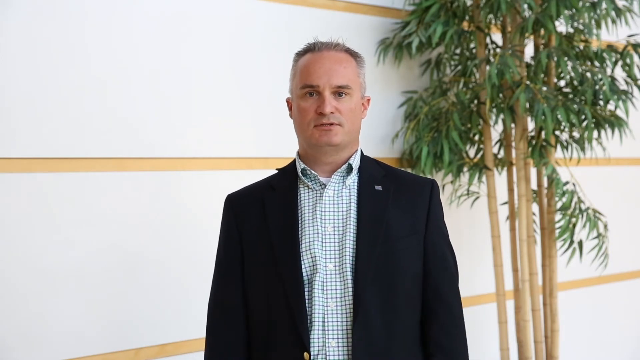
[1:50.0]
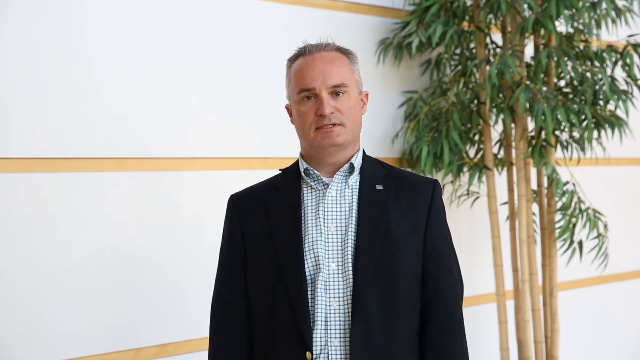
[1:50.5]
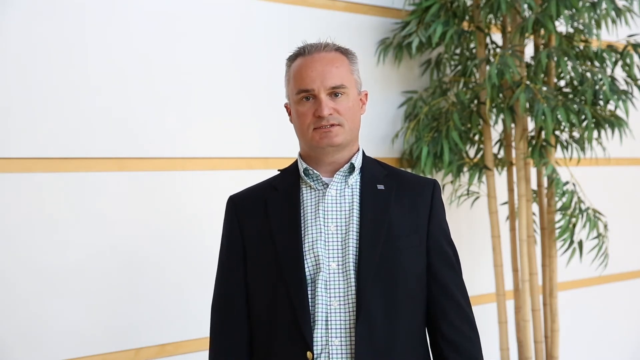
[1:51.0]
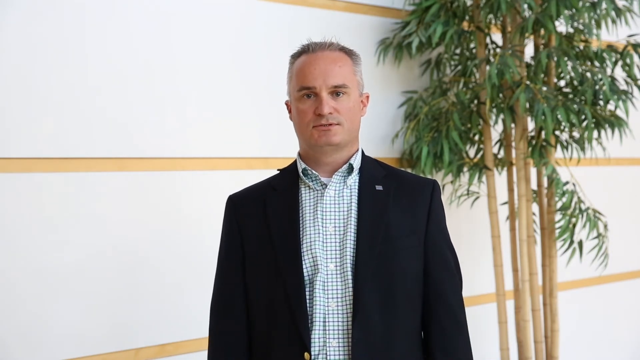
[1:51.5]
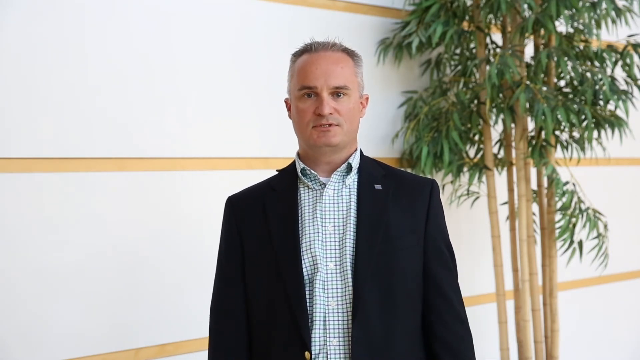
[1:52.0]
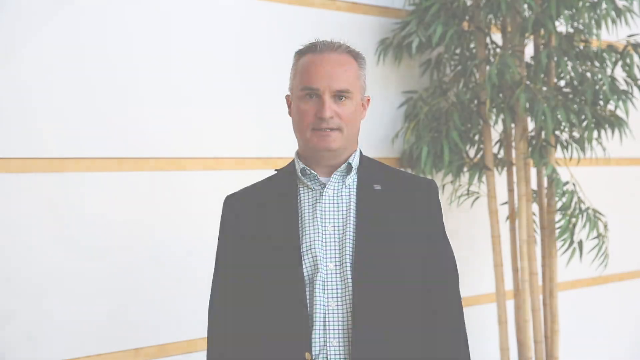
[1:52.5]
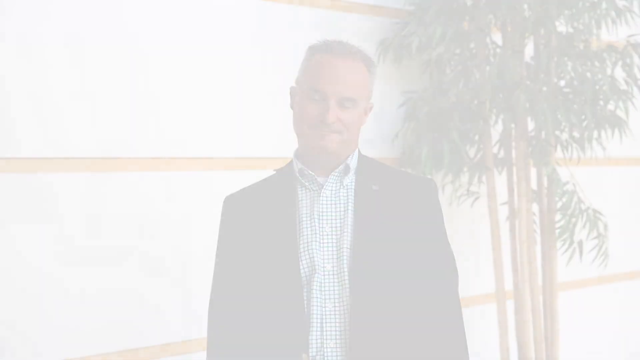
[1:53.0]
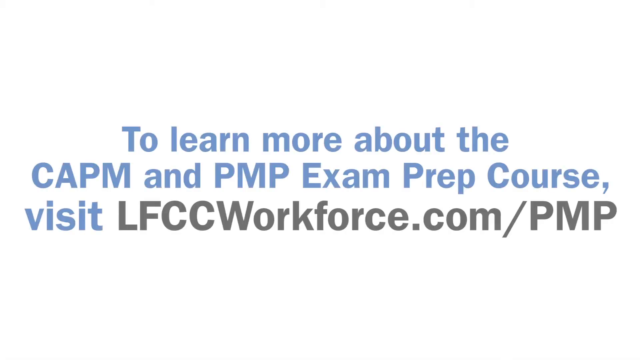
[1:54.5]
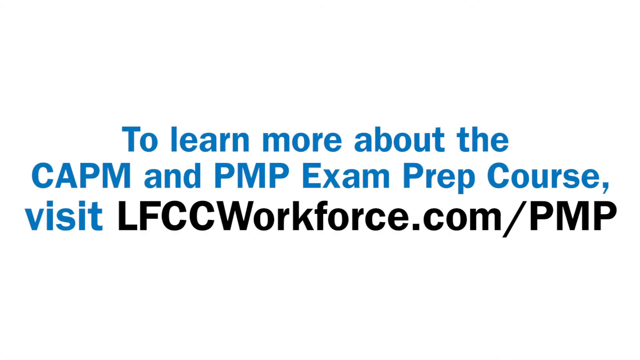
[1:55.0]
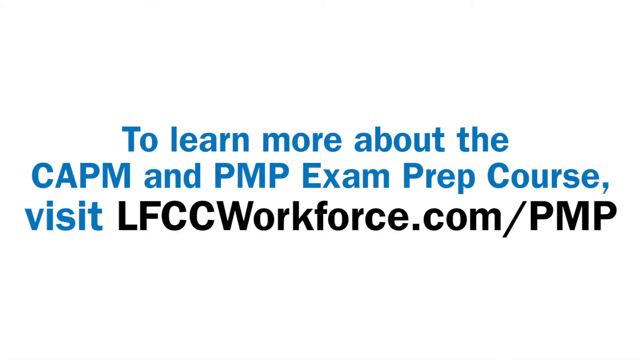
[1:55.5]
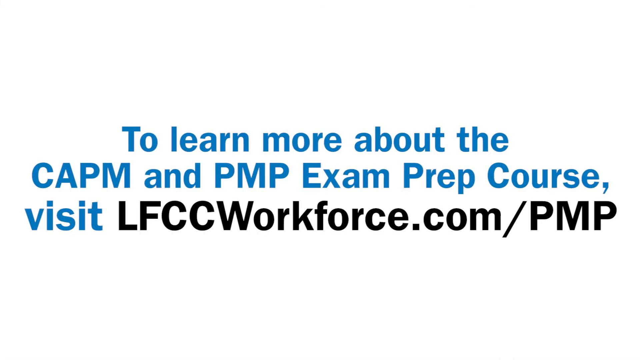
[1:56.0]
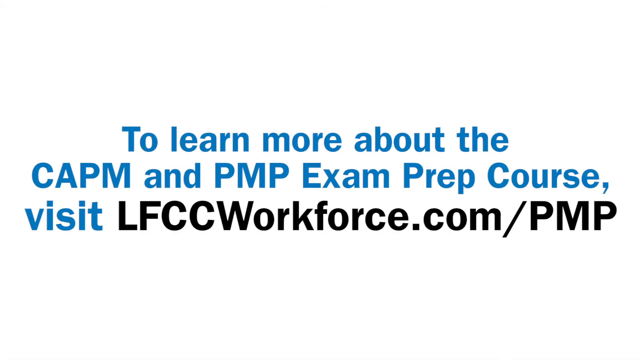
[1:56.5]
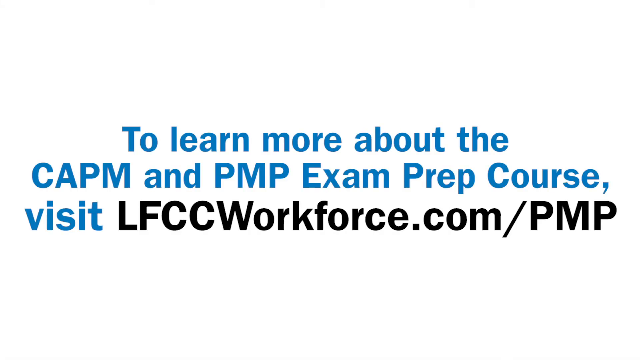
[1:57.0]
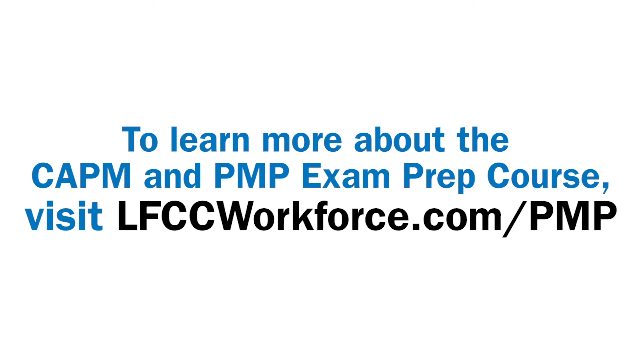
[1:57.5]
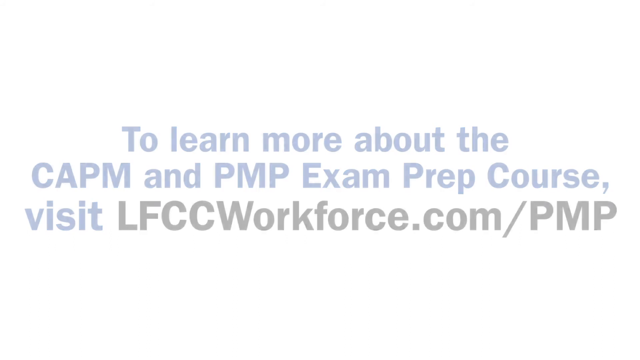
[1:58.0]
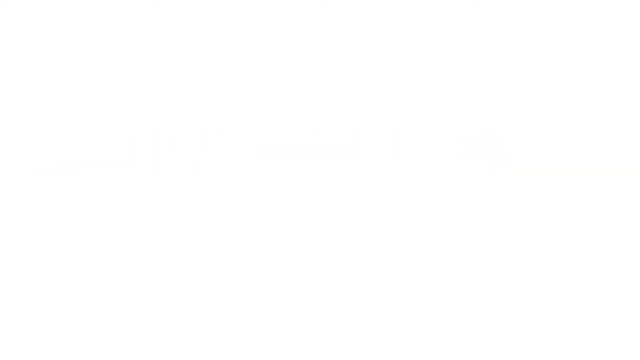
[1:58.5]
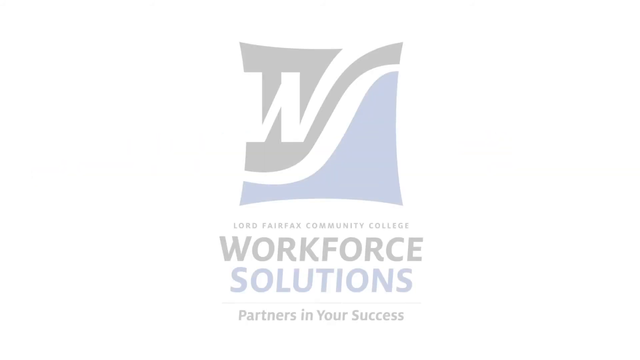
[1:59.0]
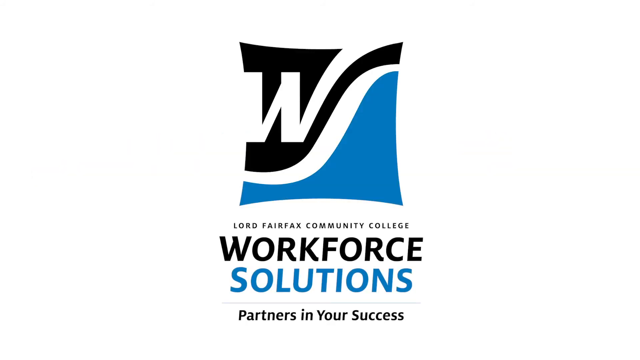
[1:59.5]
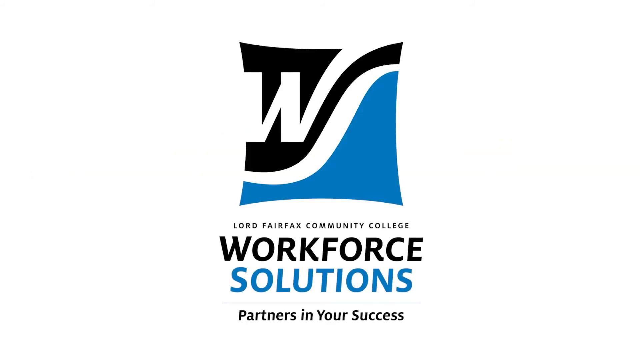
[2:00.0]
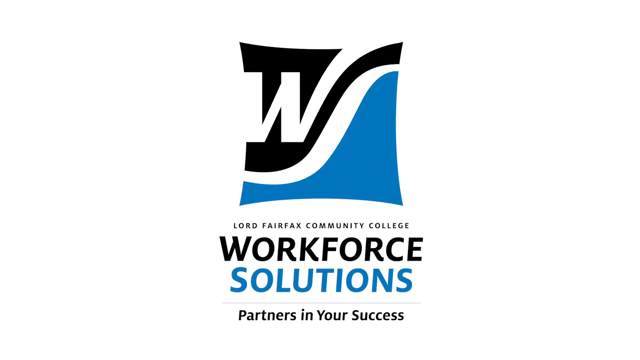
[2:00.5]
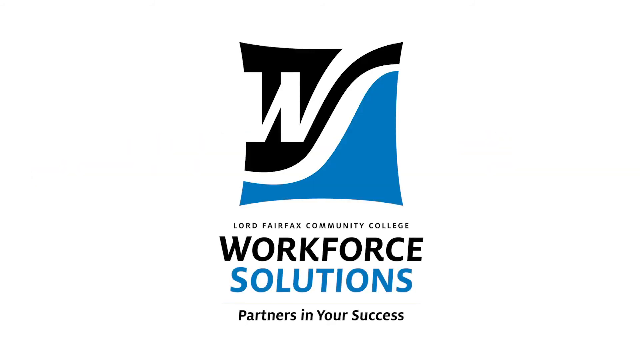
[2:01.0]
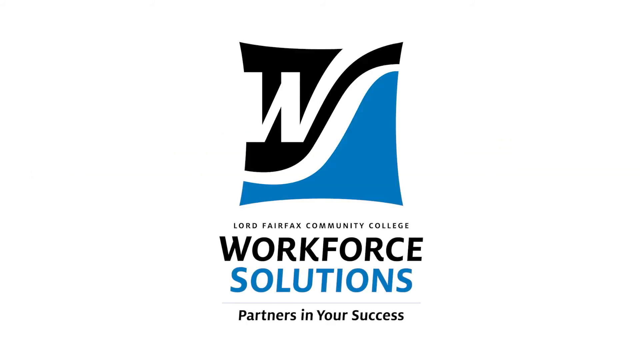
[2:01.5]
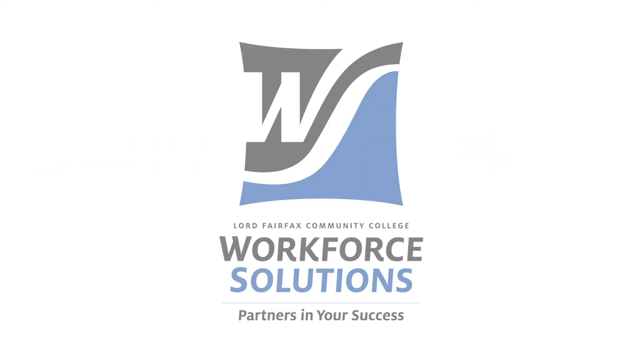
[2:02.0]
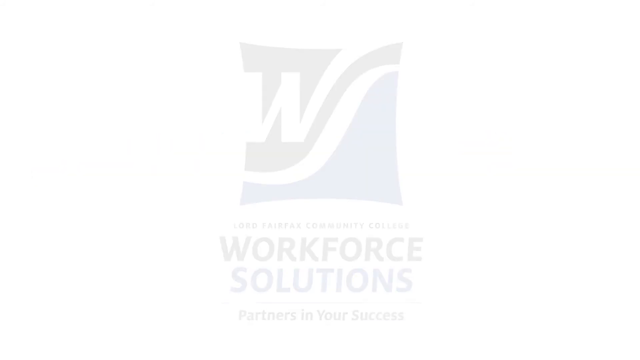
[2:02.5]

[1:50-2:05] Chris is still talking, his eyes blinking normally. A white background then appears with information in two colours: the first part, in blue, reads "to learn more about the CAPM and PMP exam prep course visit", and the second part, in black font, reads "LFCCworkforce.com". The information then disappears, and the logo seen at the start returns in a combination of black, blue and white, with "workforce" in black and "solution" in blue below.